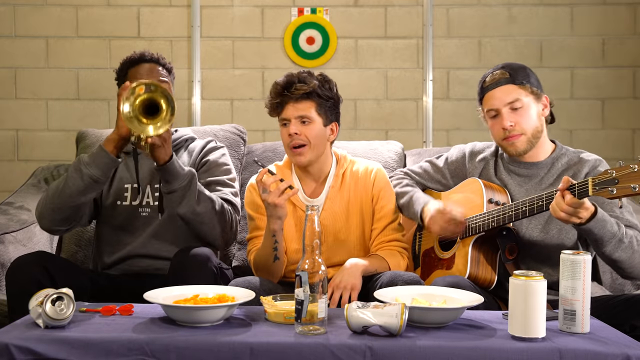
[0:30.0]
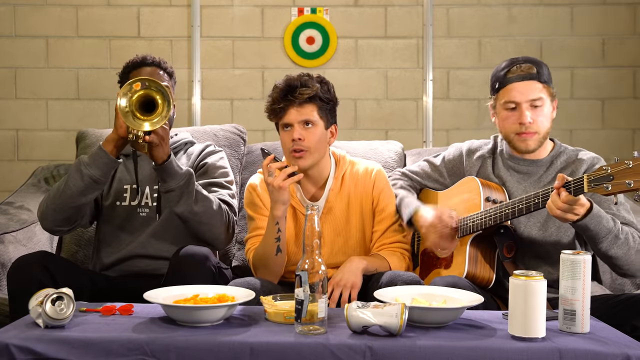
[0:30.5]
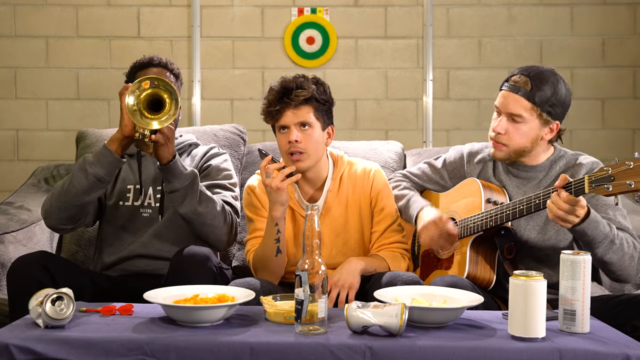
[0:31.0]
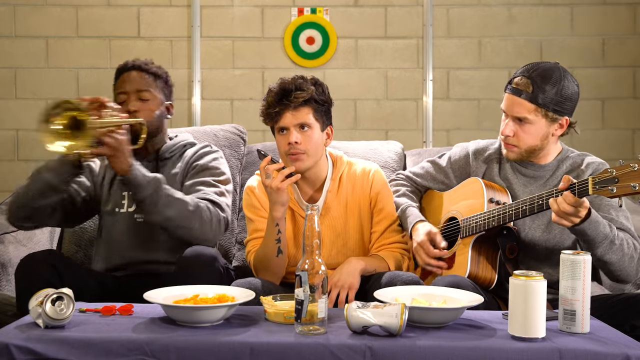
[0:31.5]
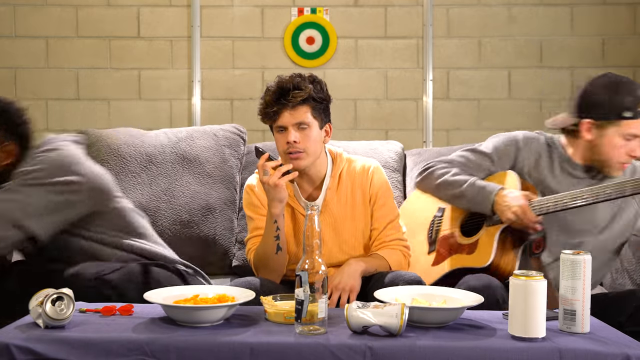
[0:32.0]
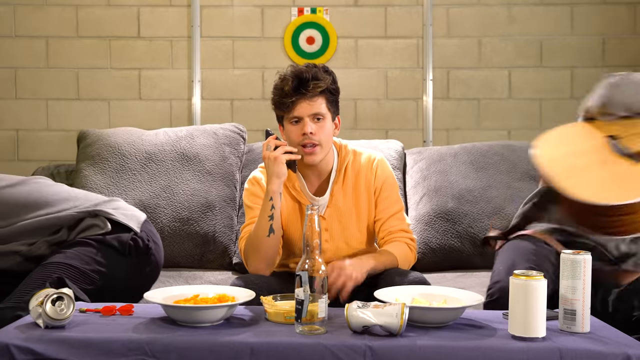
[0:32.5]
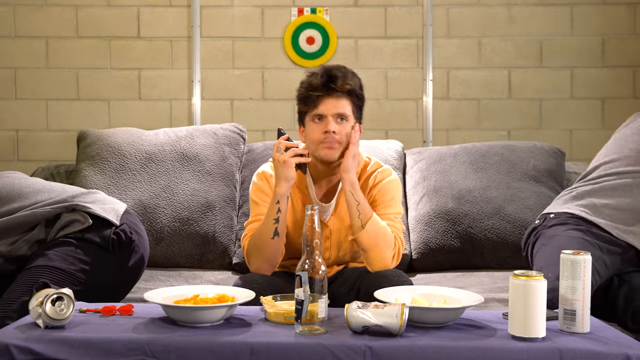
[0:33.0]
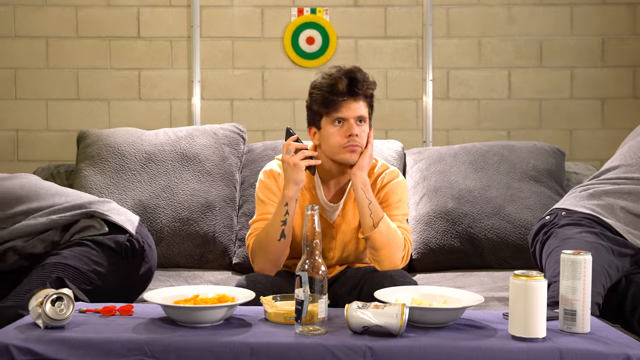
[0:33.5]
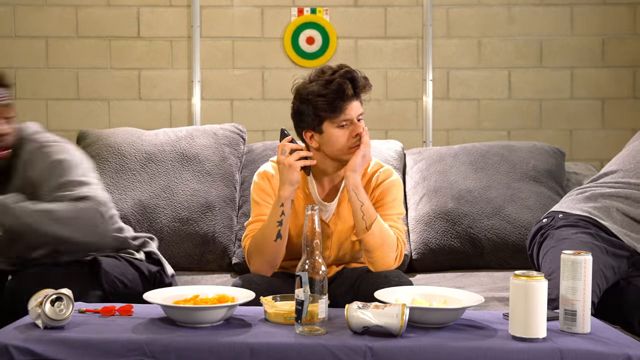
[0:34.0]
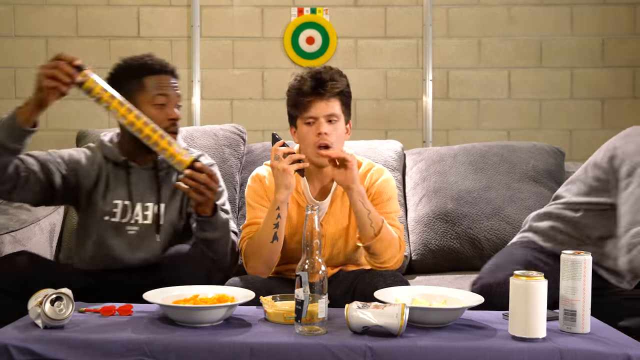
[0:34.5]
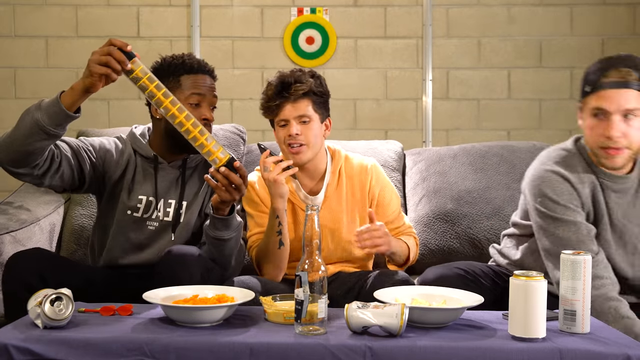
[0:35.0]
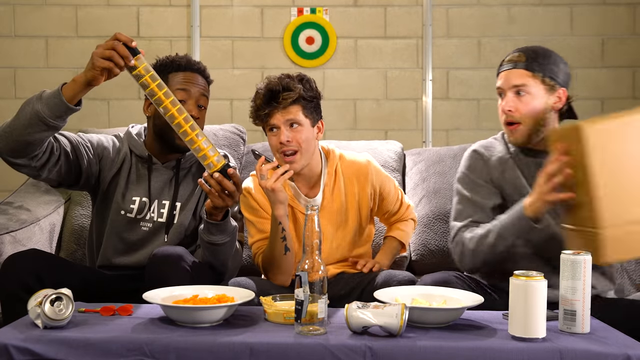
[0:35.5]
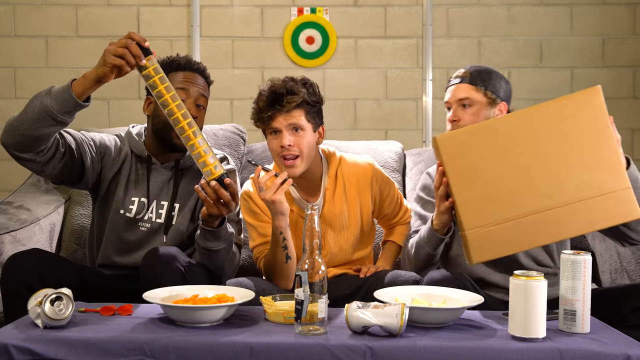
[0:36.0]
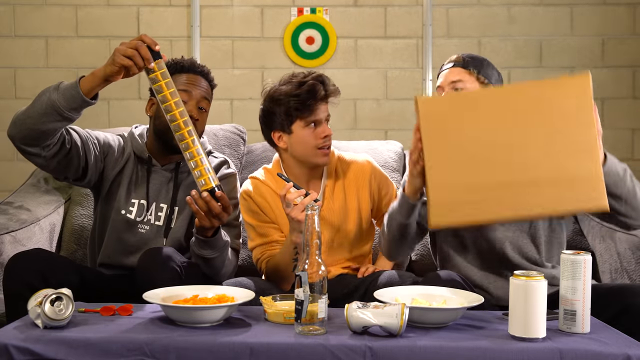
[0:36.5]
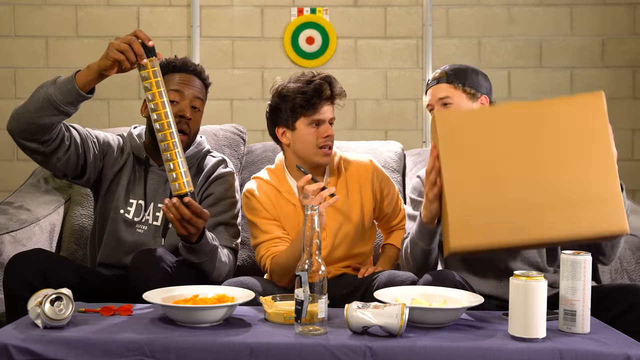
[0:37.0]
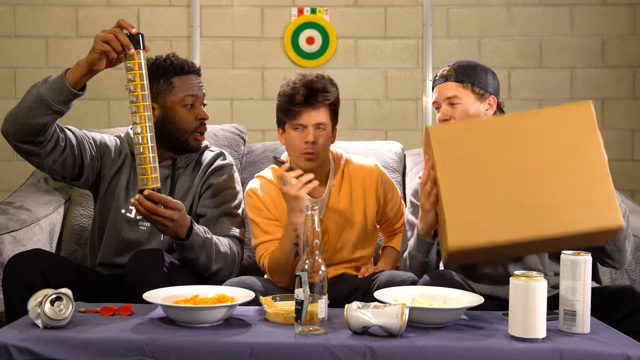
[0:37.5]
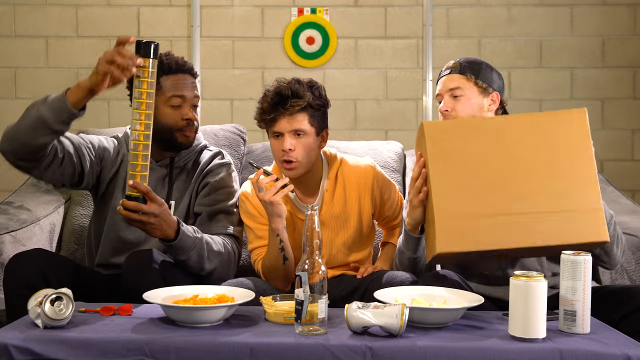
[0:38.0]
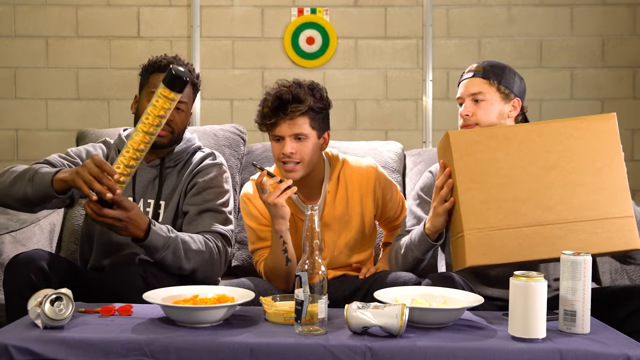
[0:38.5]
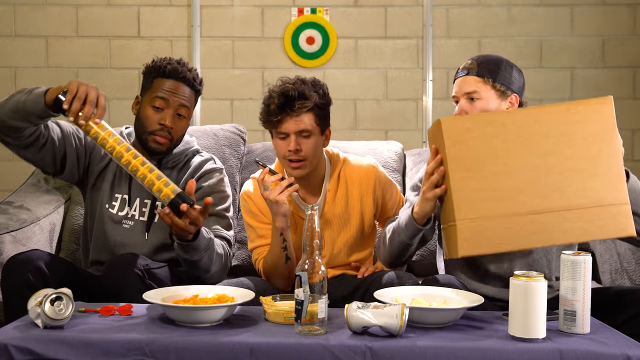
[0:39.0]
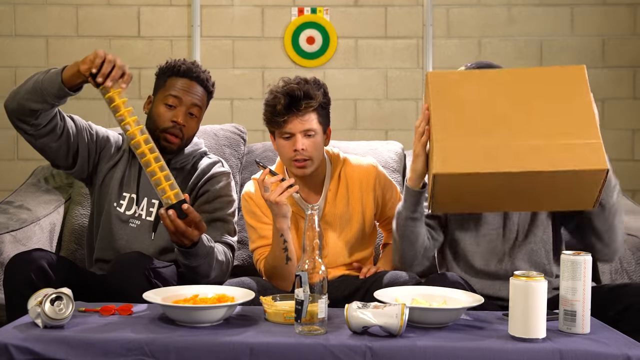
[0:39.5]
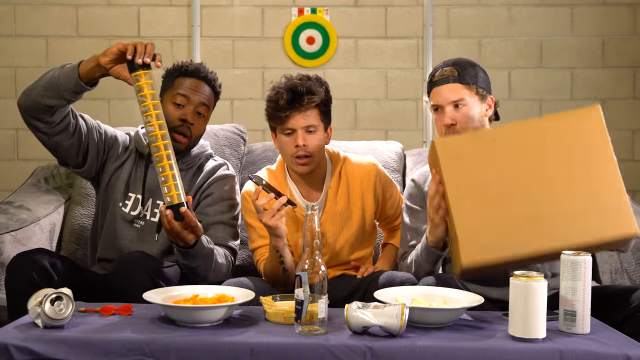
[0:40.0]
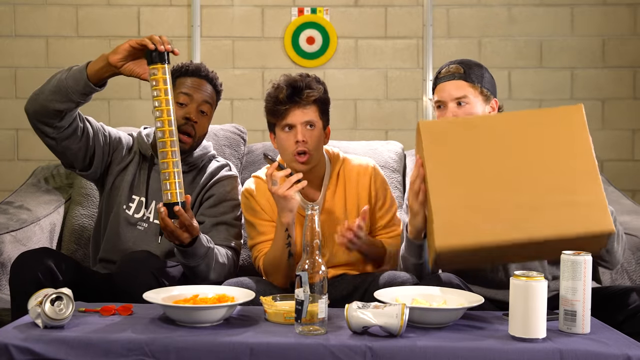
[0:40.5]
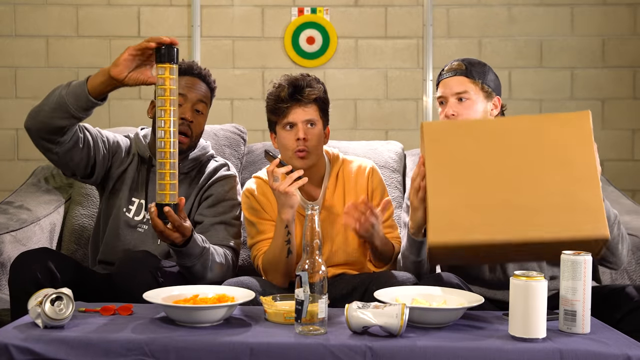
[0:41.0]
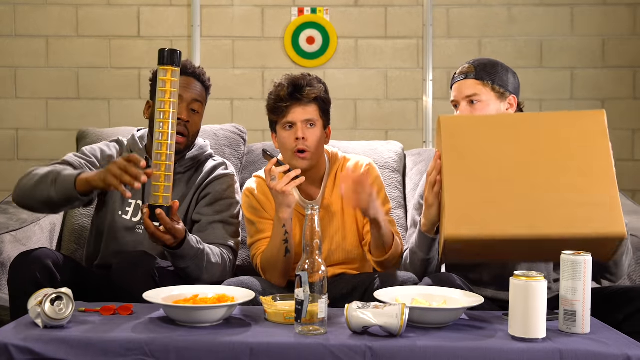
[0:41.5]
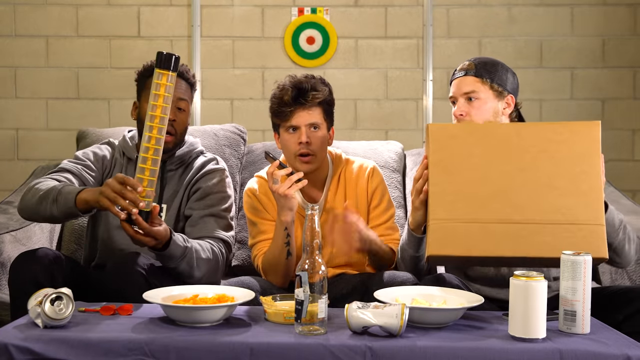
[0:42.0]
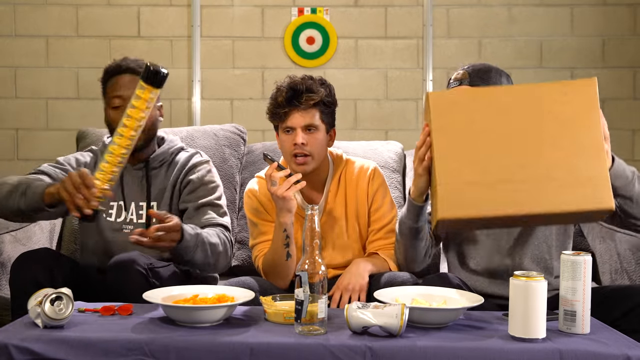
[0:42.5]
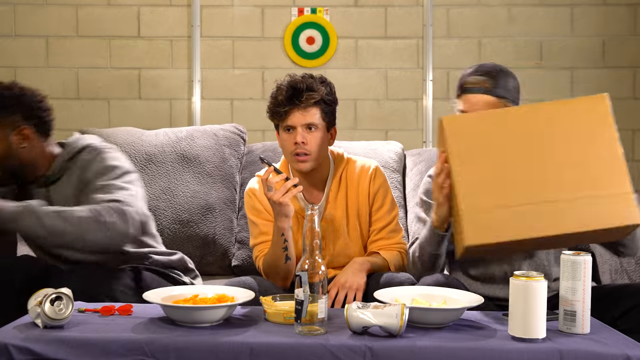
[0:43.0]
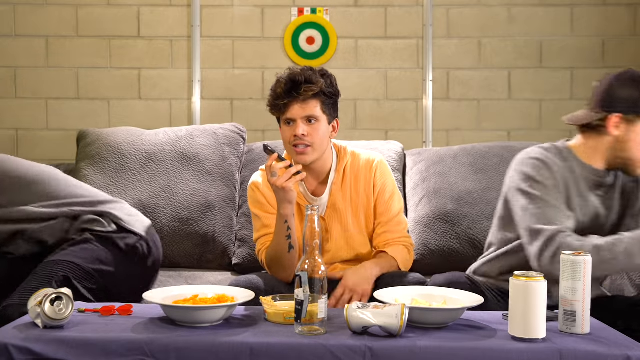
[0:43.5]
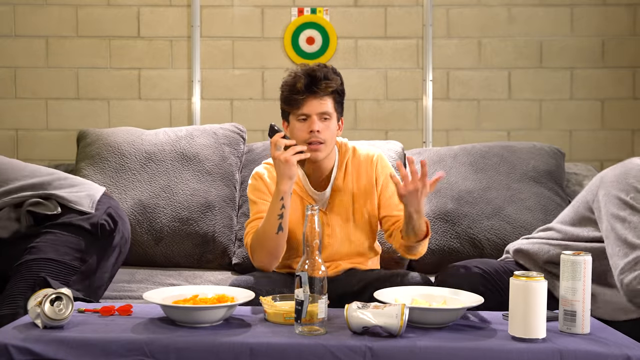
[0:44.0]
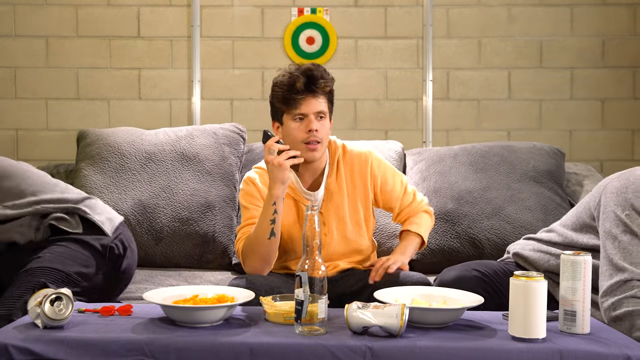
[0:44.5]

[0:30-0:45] In the same shot from in front of them, the men play their instruments while the man in the middle continues talking on the phone. The men on the left and right then lean over to set their instruments down and pick up something else. The man on the right with the baseball cap sets his guitar down and picks up a large, brown rectangular box with no writing on it. He shakes it, looking at the man in the middle, who is still on the phone. The man on the left, a black man, picks up some type of contraption that looks like one of those old toys that make weird noises when turned upside down, and makes noise at the man on the phone. The man on the phone sort of looks at the other men but talks the entire time.